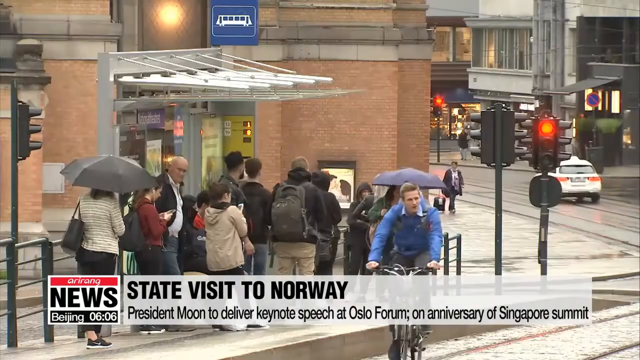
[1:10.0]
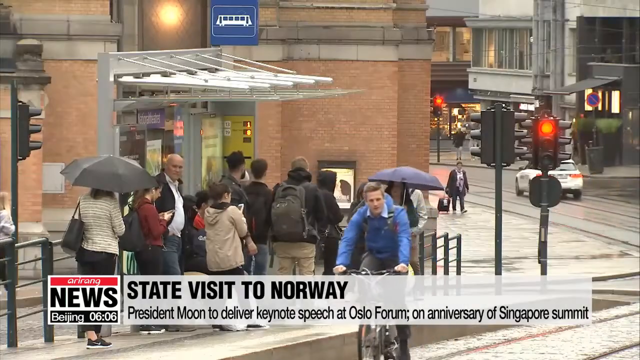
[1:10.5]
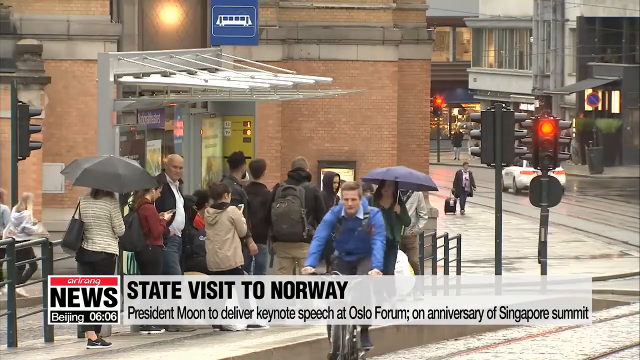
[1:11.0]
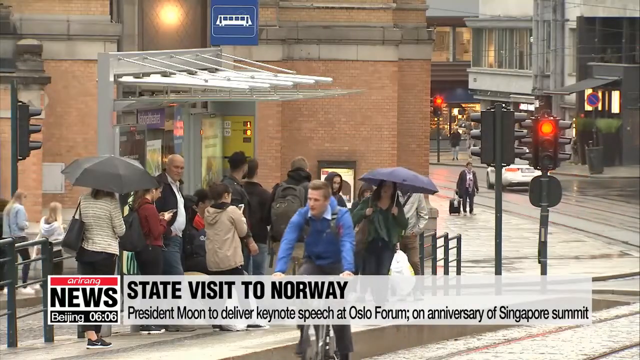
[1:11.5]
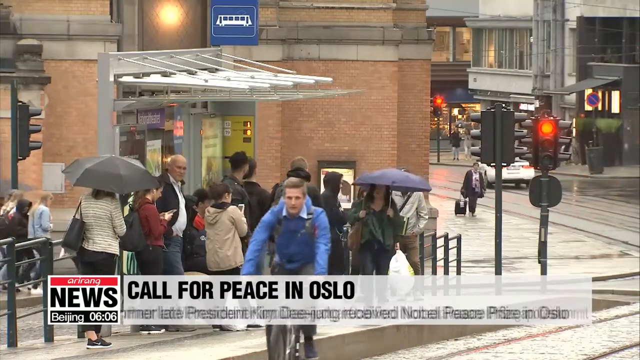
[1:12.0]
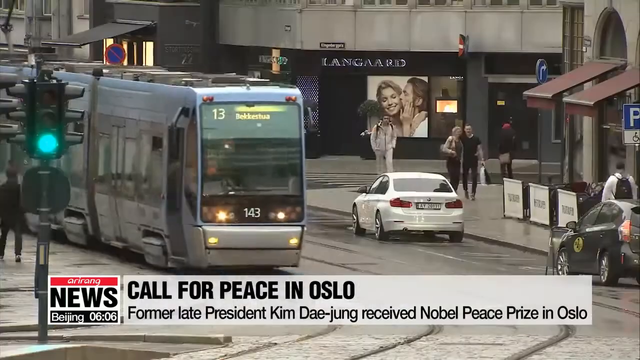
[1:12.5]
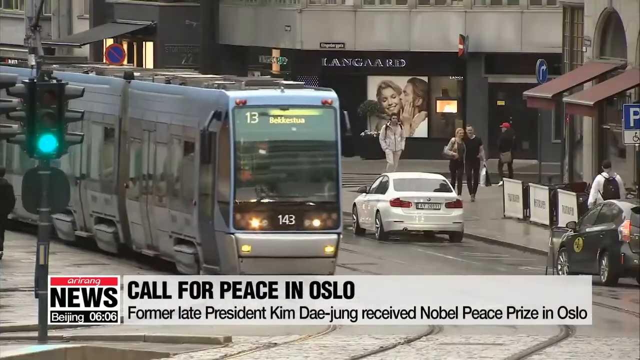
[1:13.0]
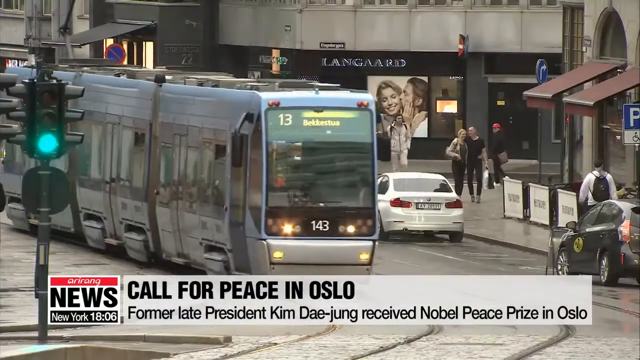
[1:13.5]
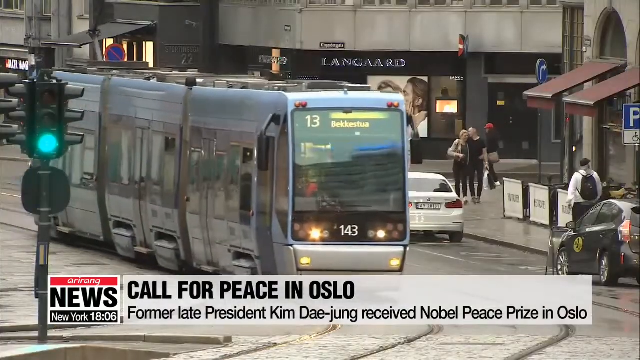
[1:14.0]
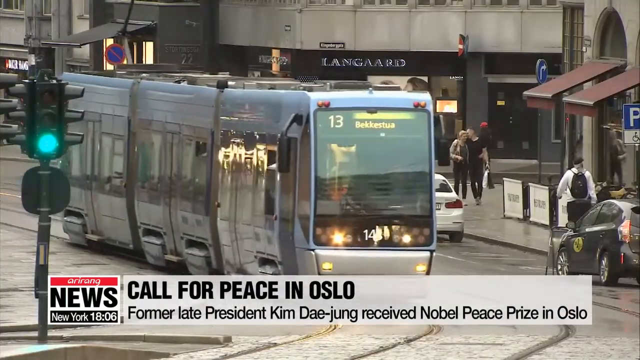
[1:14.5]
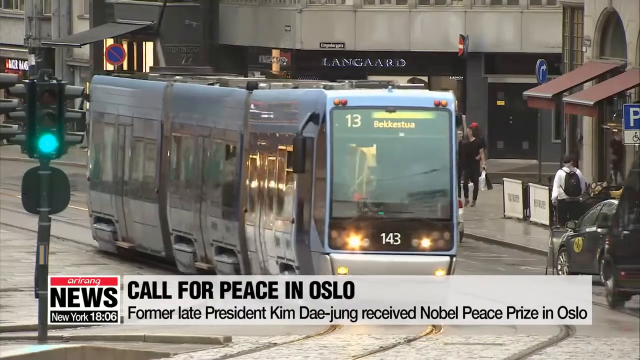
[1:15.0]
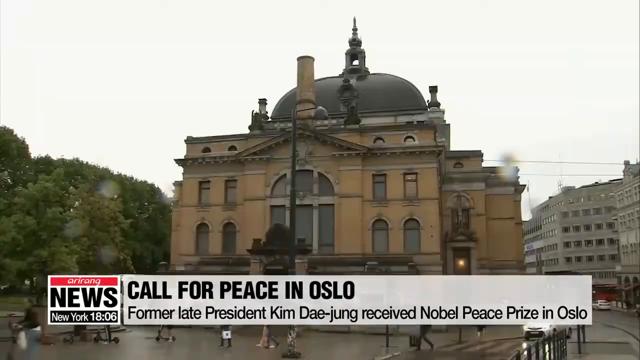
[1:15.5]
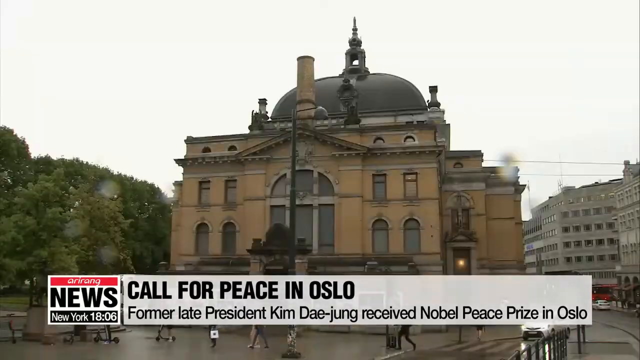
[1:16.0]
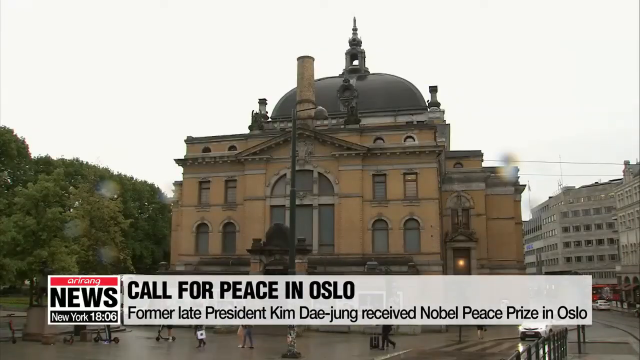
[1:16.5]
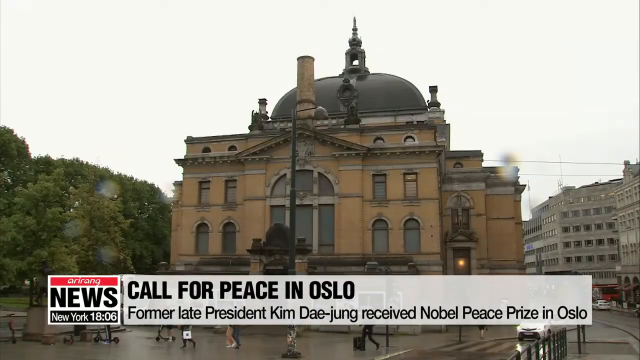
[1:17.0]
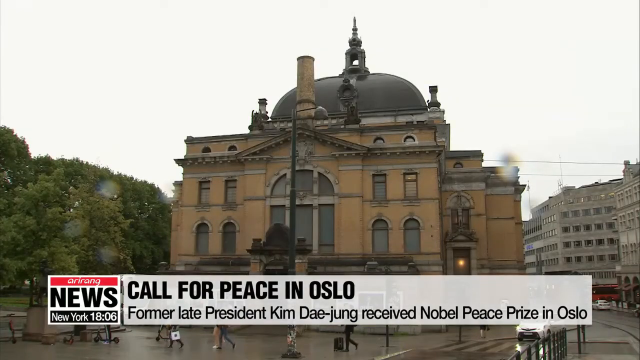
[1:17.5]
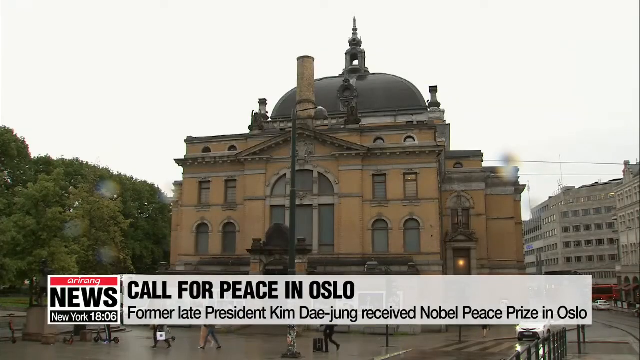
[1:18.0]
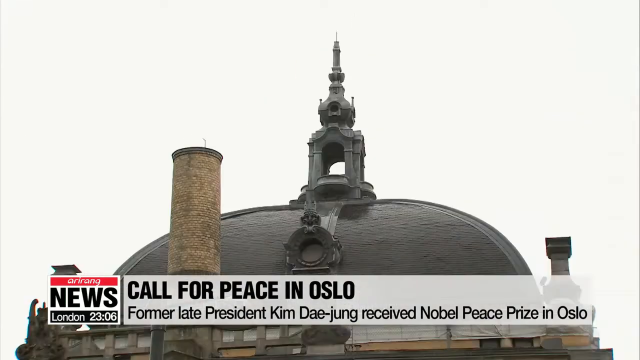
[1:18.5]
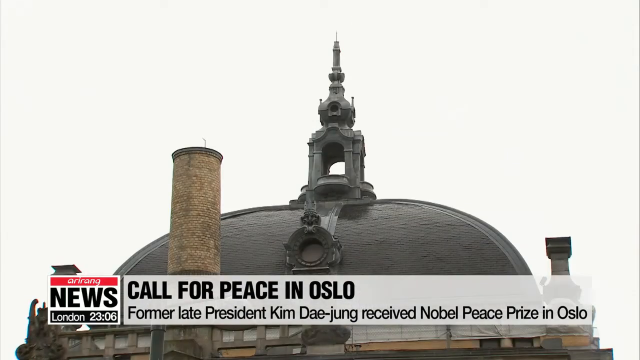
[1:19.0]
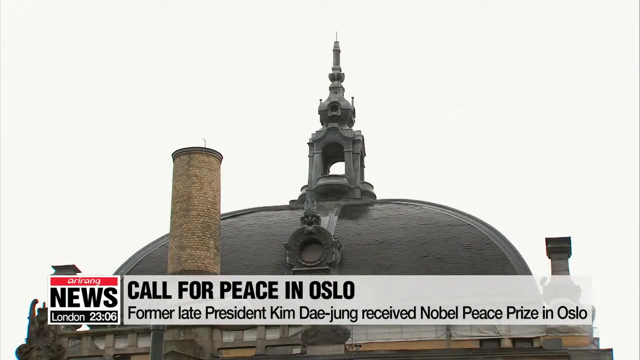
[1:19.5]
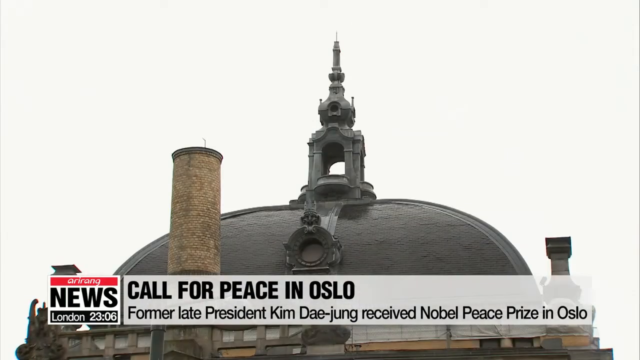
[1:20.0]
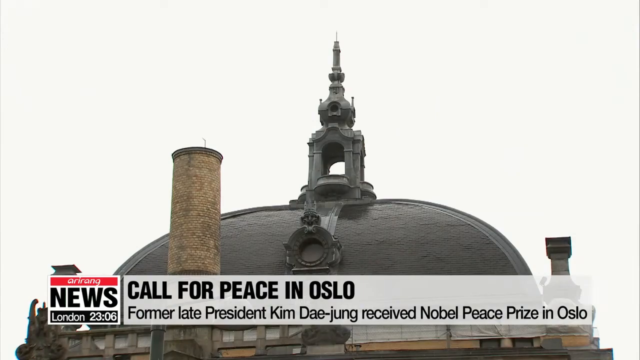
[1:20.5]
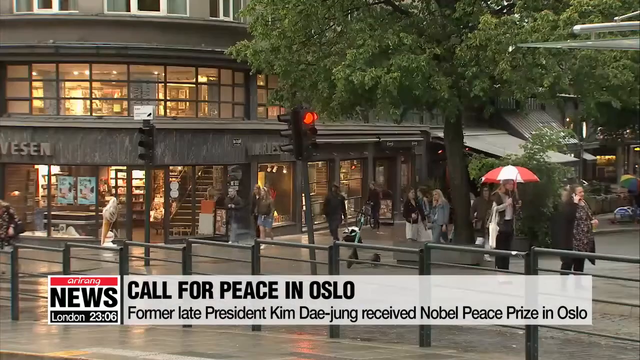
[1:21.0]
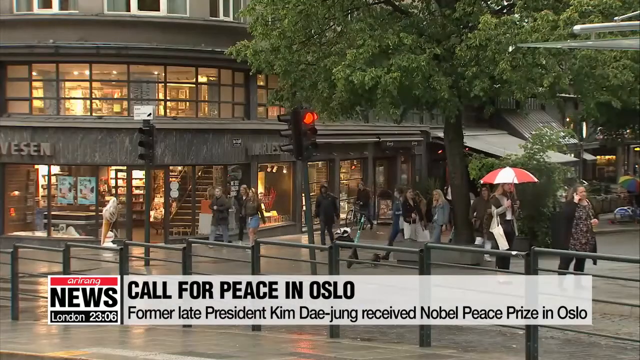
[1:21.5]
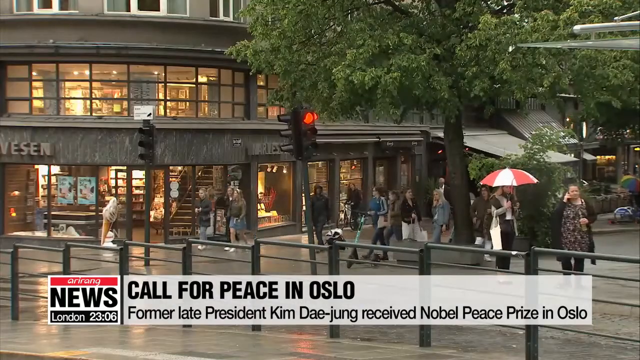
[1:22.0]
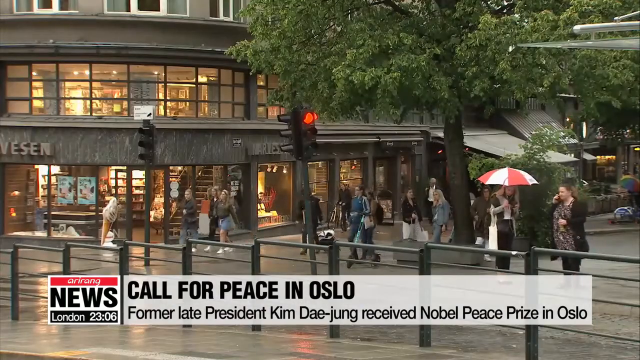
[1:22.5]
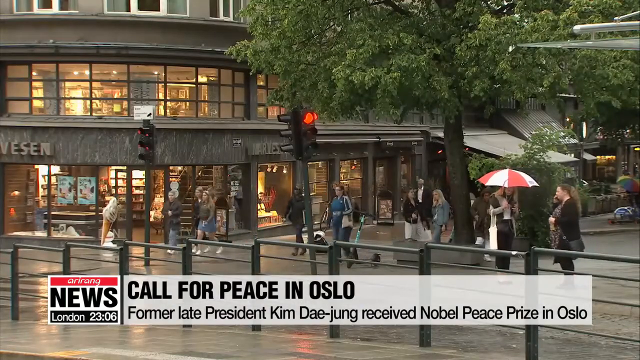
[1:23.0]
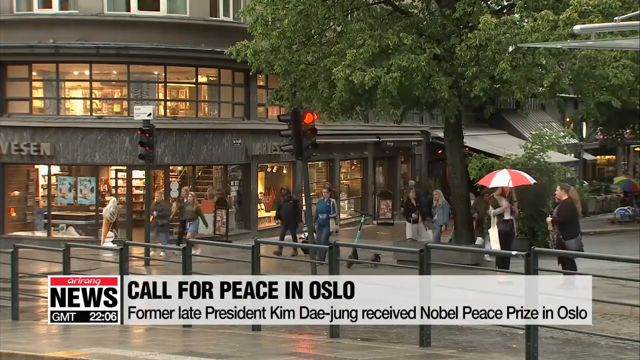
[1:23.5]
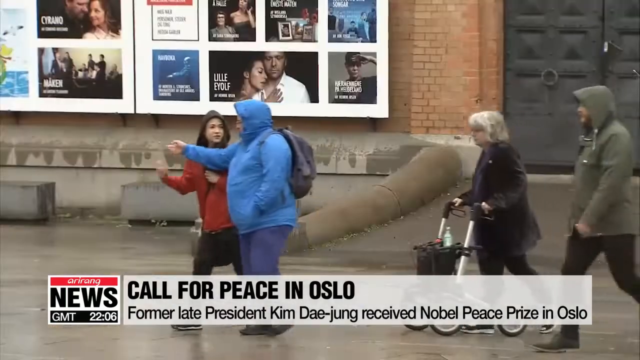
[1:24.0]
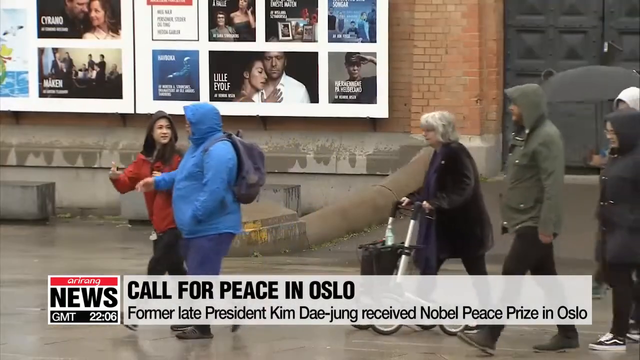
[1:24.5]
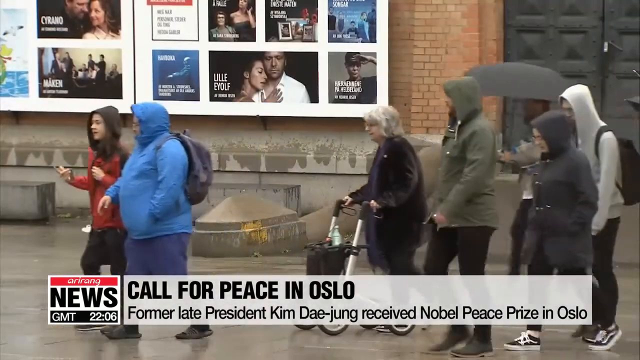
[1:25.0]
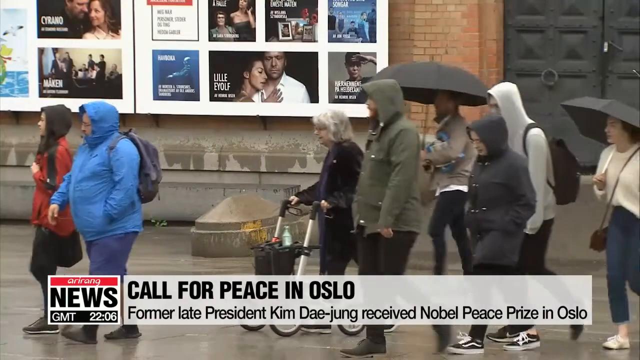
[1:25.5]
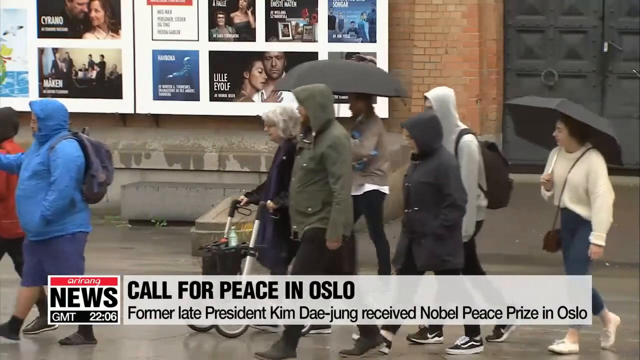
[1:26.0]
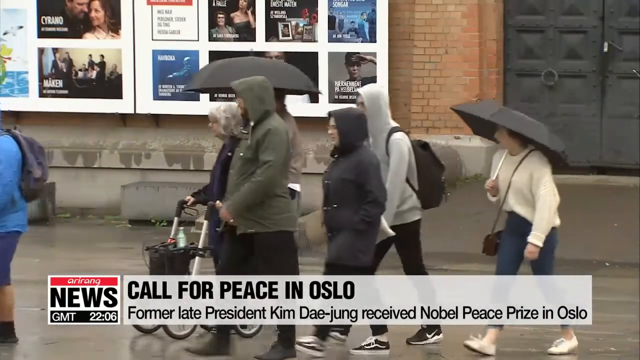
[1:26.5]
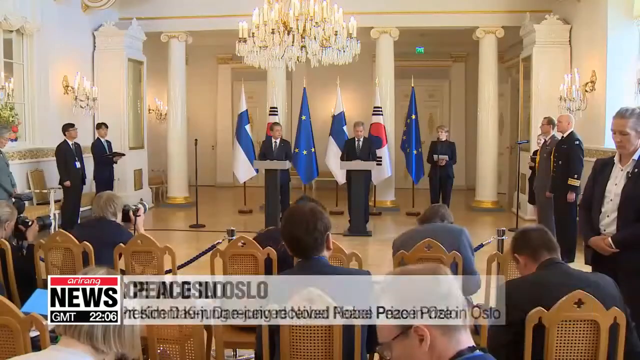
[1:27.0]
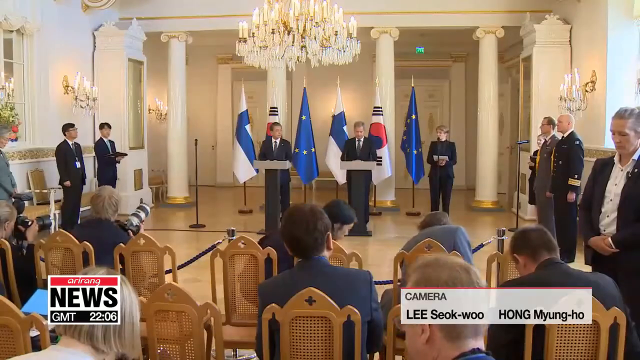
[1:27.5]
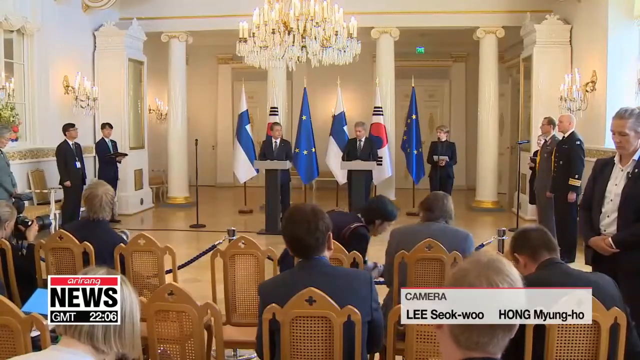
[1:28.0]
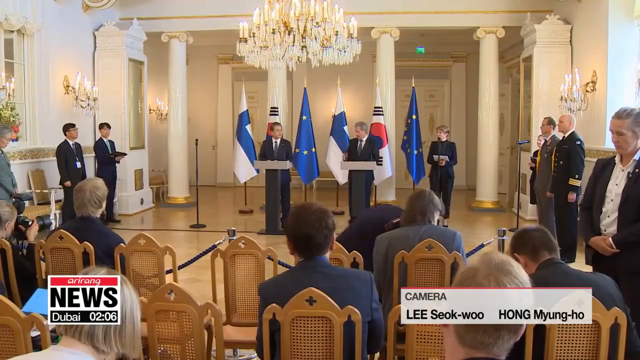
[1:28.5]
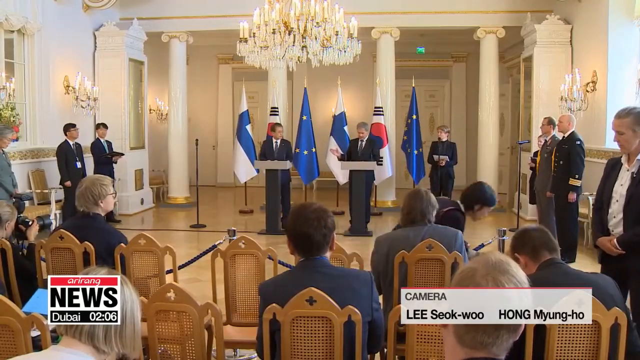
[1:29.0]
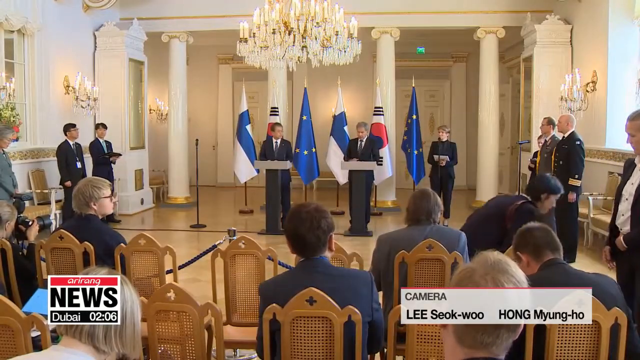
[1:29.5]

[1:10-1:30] A street in Norway is shown, with people riding bicycles, trains moving and pedestrians walking. A building appears, along with text reading "former late president Kim Dae-jung received Nobel Peace Prize in Oslo." Some people on the street have umbrellas over their heads, and it seems kind of rainy. Street lights are visible, and the traffic lights are green as a train passes by.